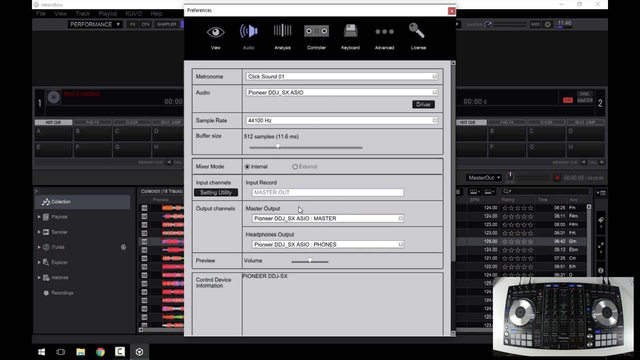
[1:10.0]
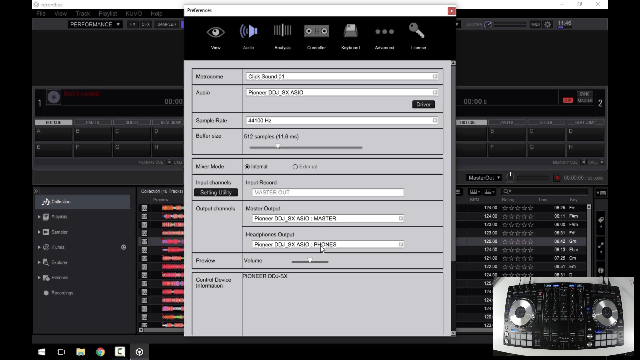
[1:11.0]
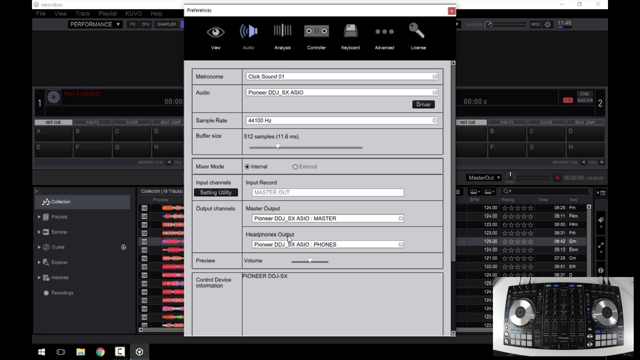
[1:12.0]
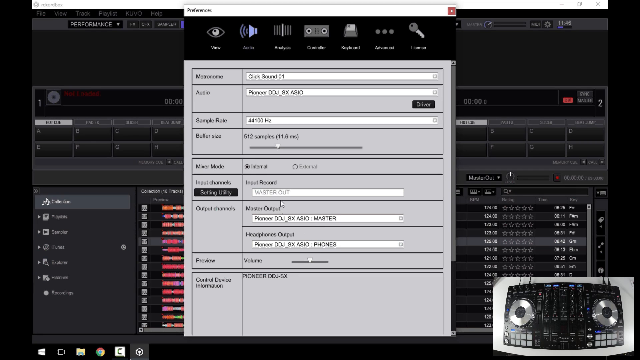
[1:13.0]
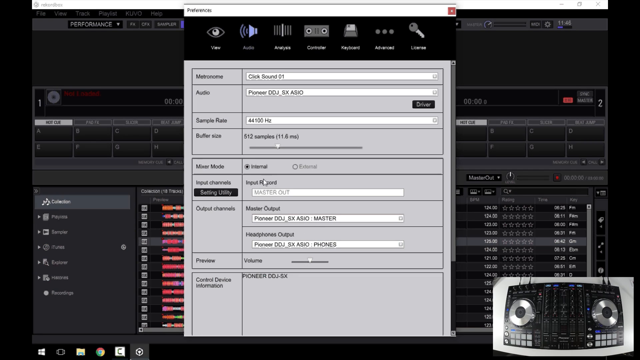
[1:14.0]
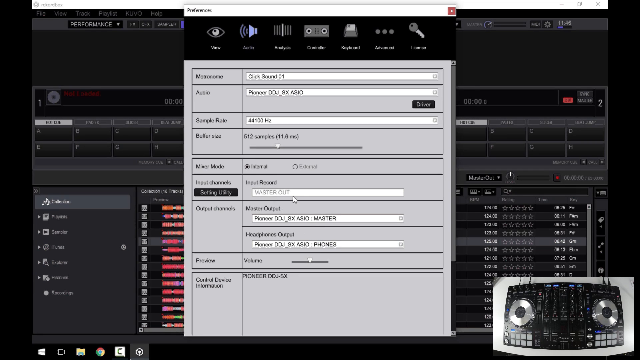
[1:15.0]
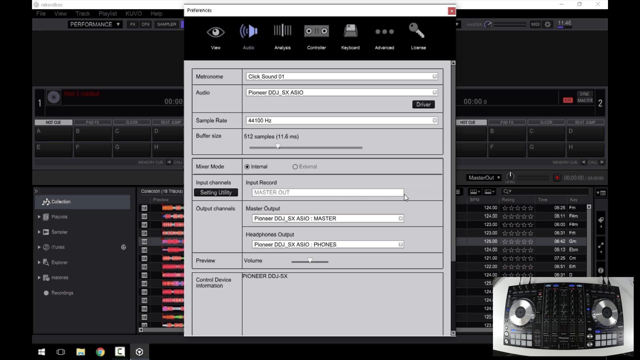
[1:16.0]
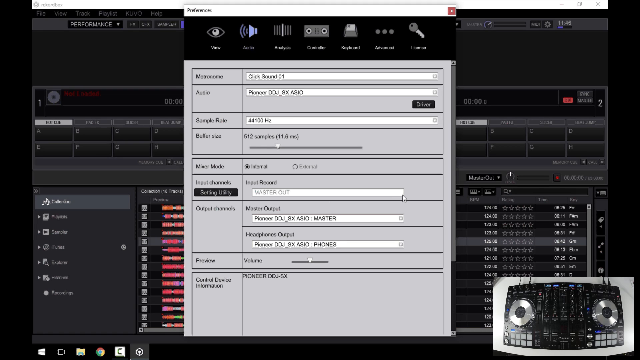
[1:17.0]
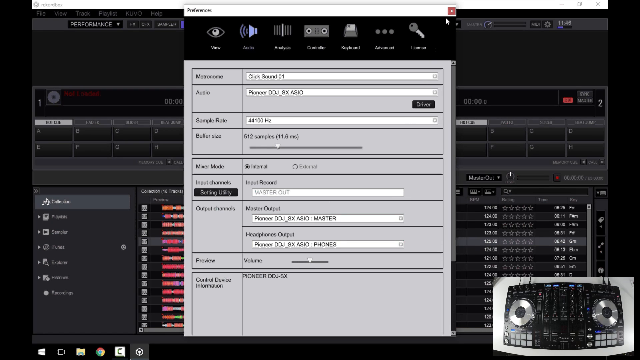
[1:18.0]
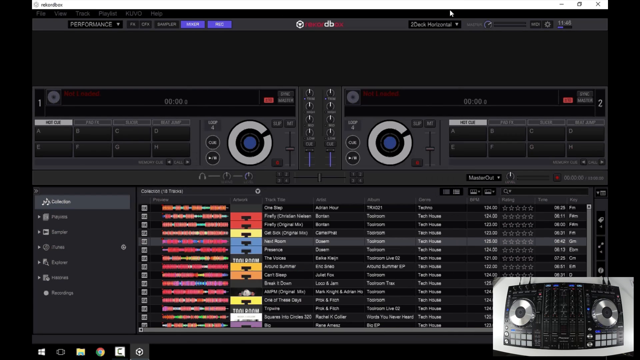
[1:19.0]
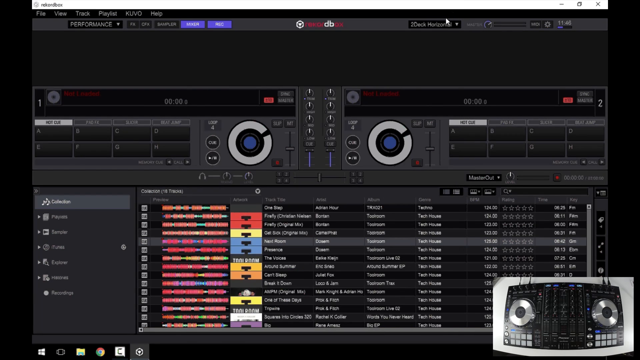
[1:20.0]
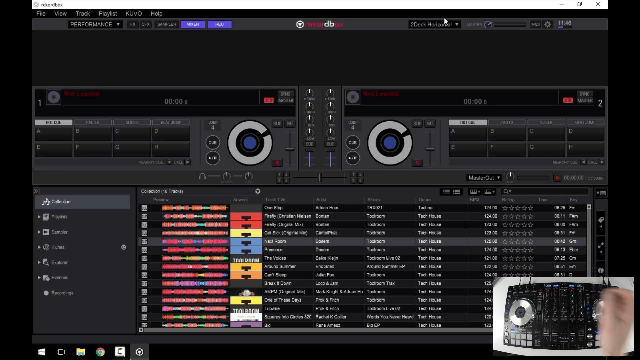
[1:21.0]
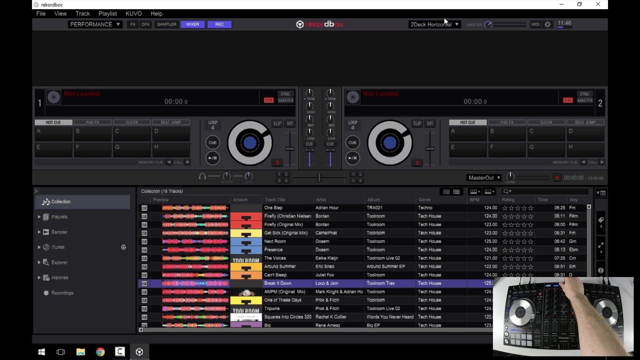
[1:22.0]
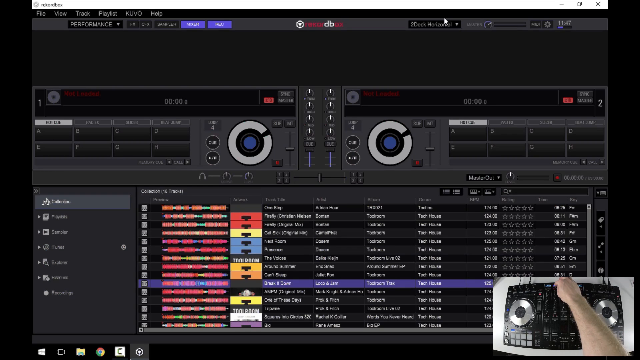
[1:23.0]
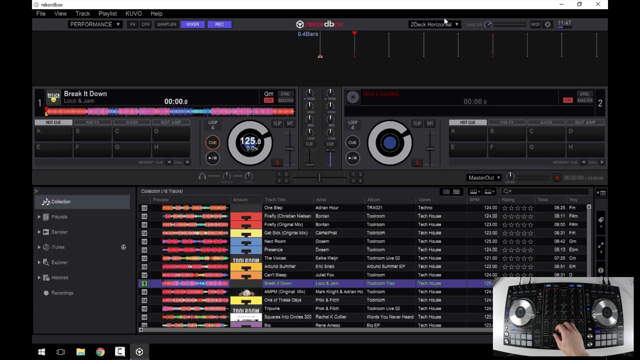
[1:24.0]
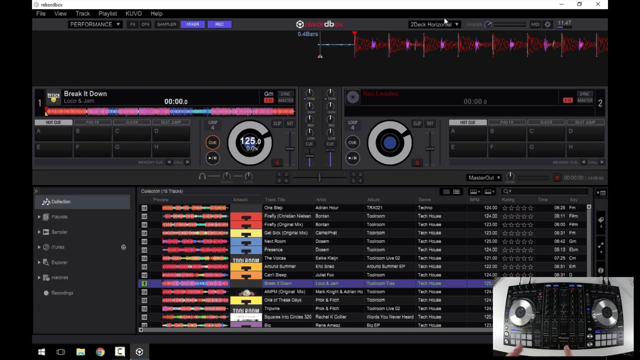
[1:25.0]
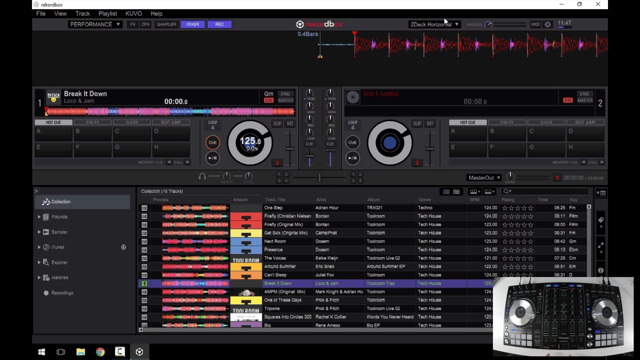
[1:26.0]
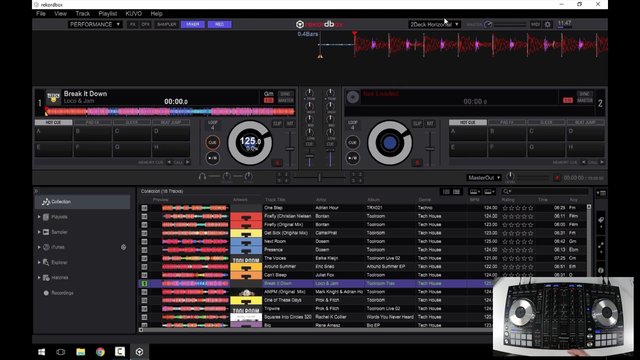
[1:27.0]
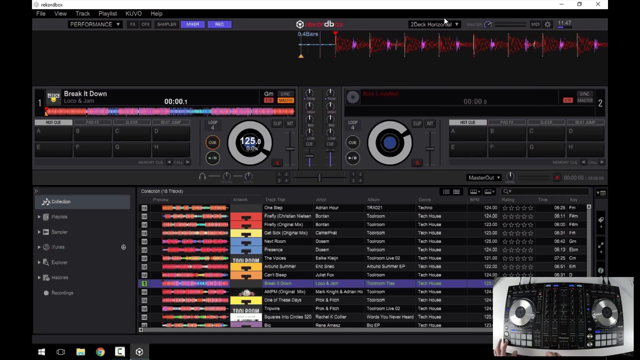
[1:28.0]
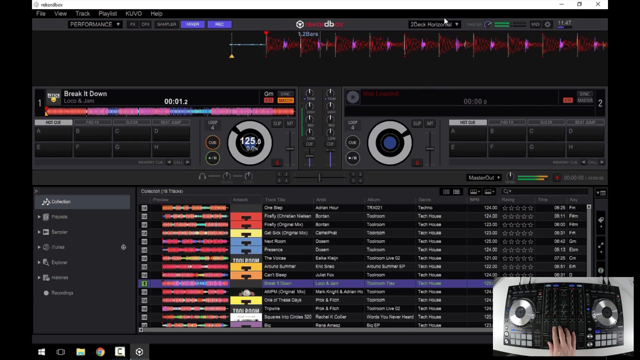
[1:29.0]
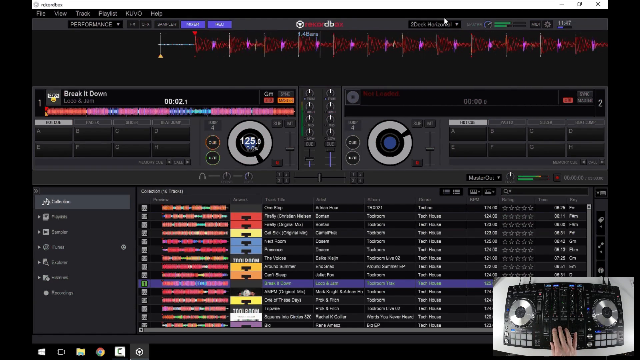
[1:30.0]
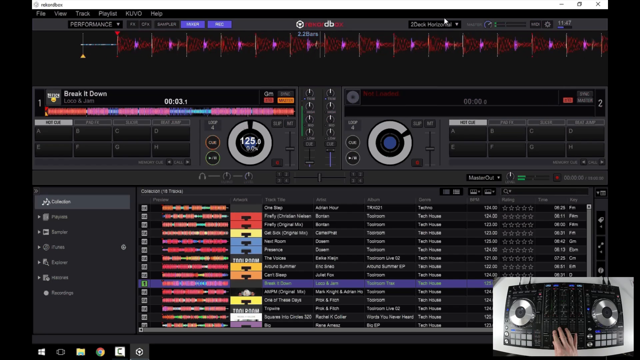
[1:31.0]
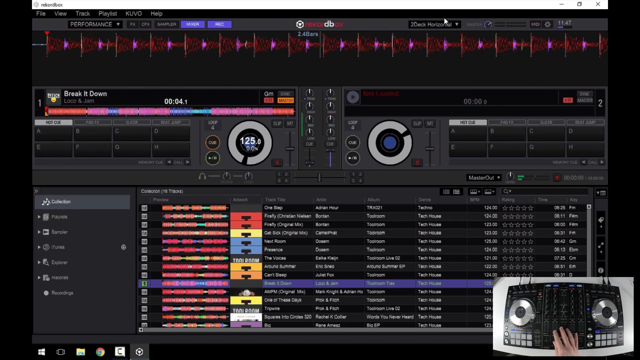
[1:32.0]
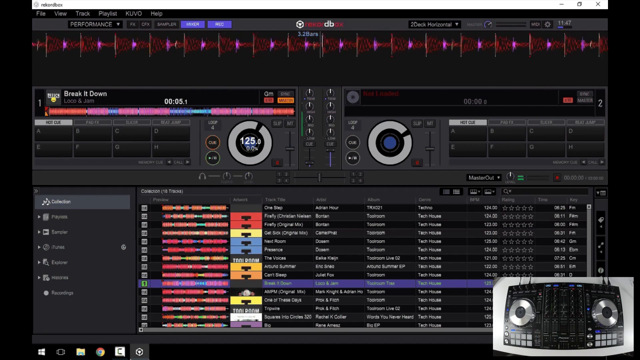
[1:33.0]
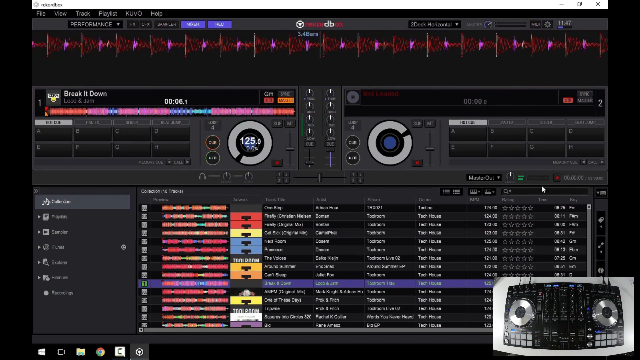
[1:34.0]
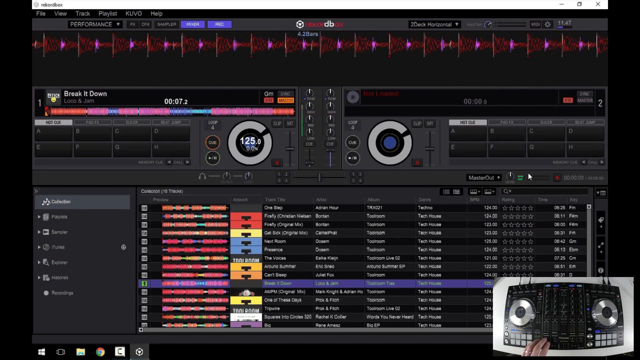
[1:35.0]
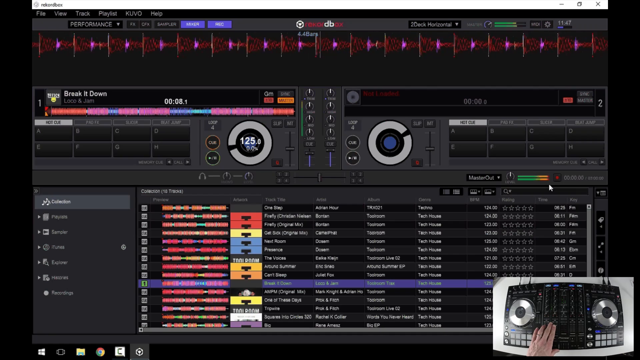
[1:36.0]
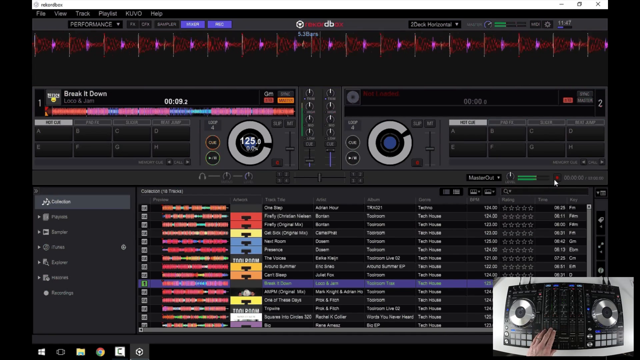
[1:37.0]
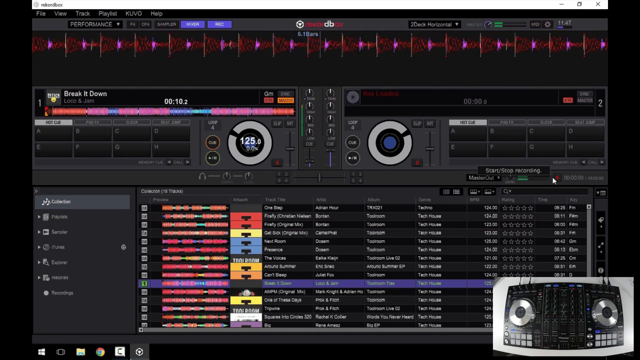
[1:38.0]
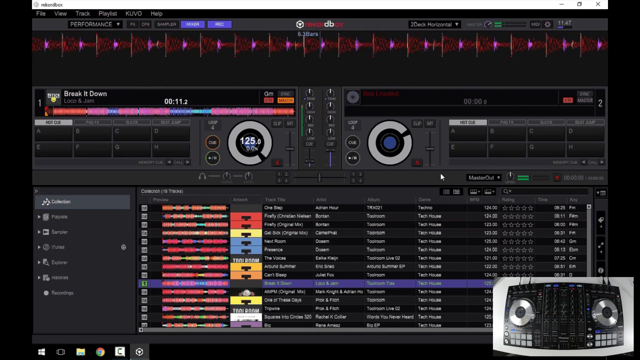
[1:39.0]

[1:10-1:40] The settings menu is still open. The user goes through it to headphones output and indicates input record. He then clicks off settings, leaving the main landing screen of the Pioneer mixer program. He seems to be adjusting something on the mixer, visible in the real-time pop-out video in the bottom right-hand corner, to do with the channels. He increases the volume of channel two, and correspondingly on the computer a row of musical notes appears, suggesting a beat and apparently music playing. Other figures are also visible, including "125" and "break it down".